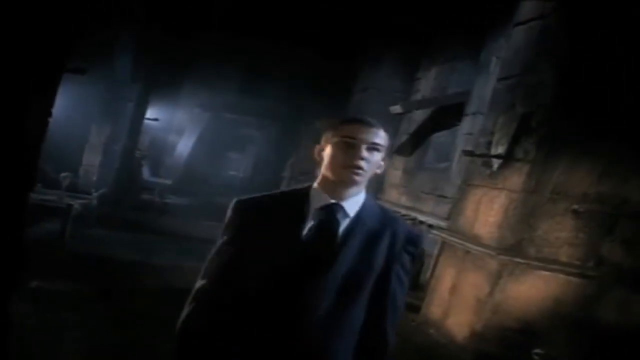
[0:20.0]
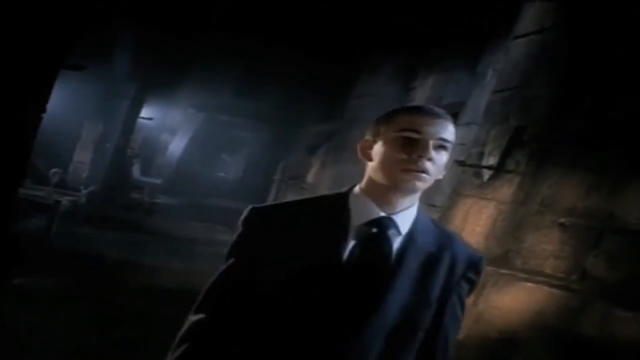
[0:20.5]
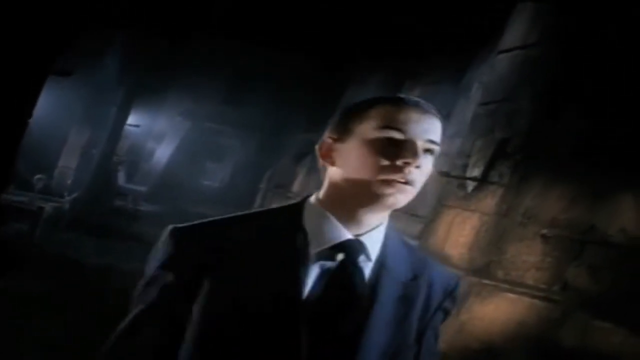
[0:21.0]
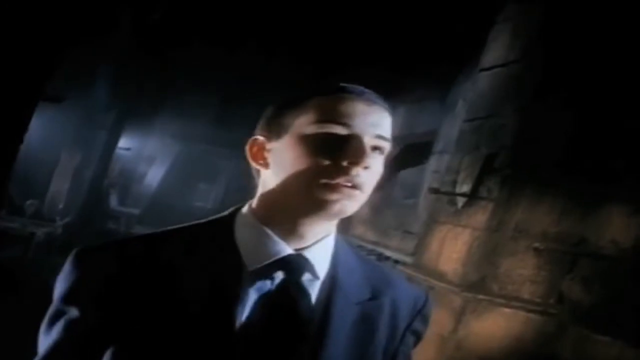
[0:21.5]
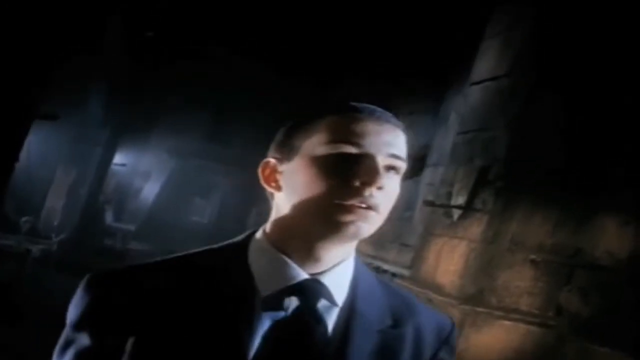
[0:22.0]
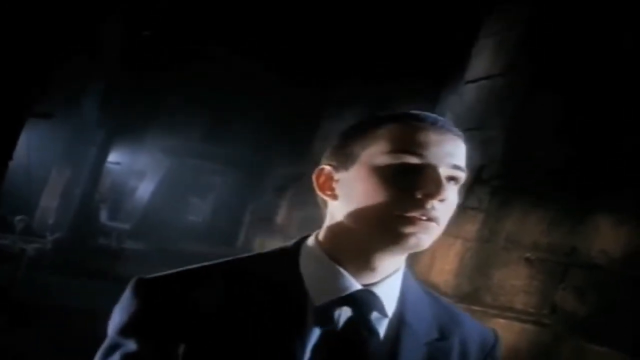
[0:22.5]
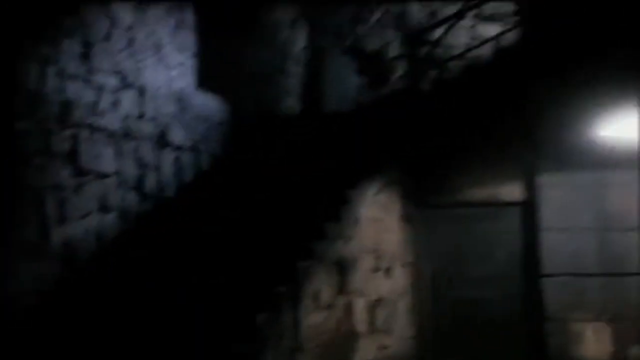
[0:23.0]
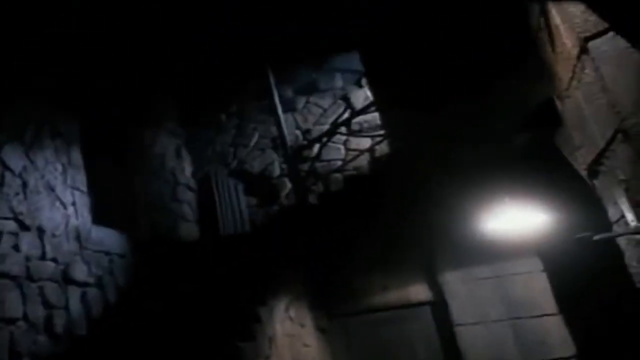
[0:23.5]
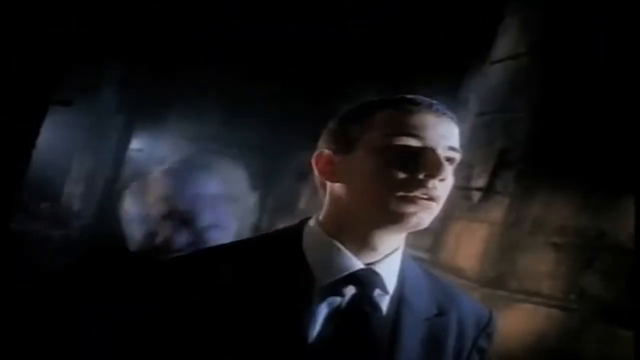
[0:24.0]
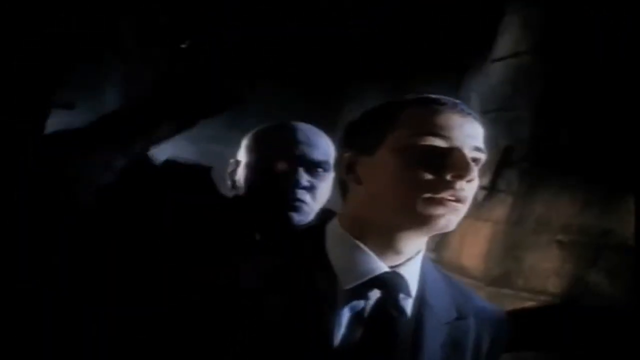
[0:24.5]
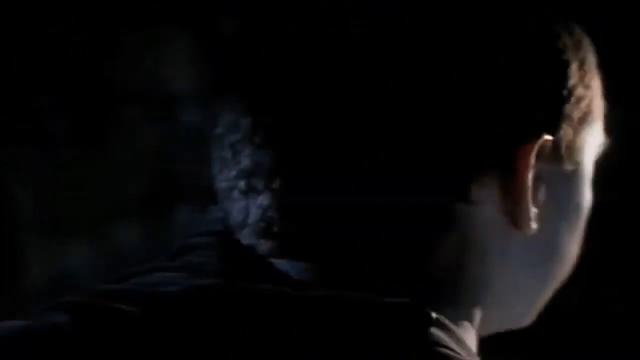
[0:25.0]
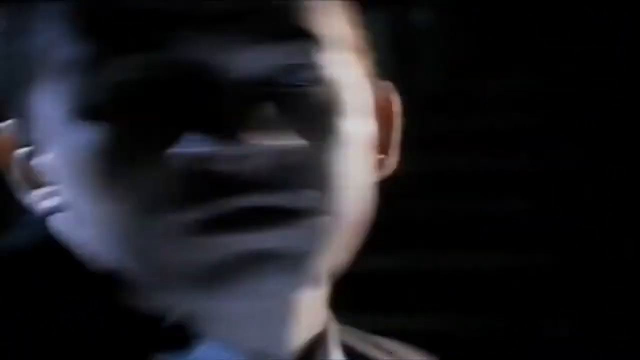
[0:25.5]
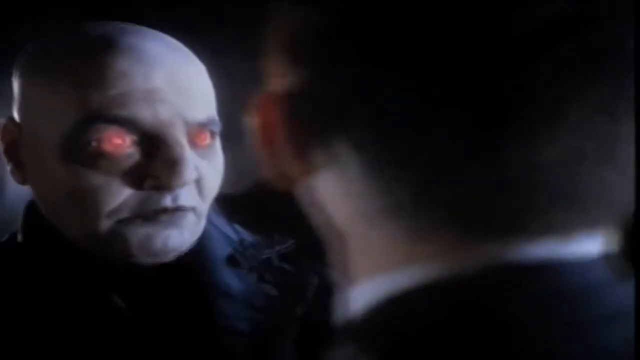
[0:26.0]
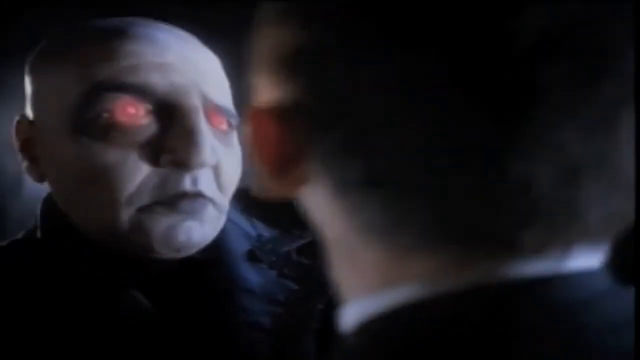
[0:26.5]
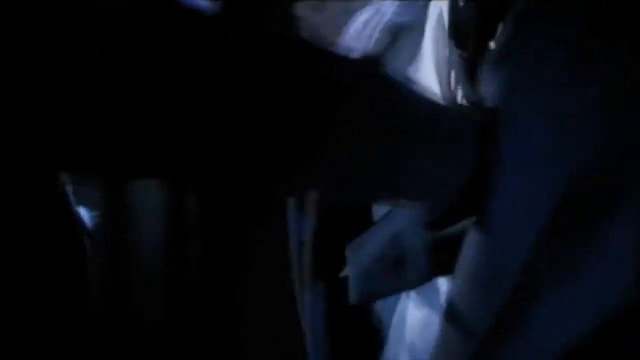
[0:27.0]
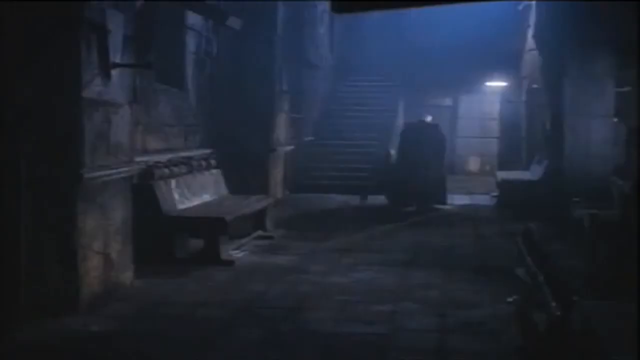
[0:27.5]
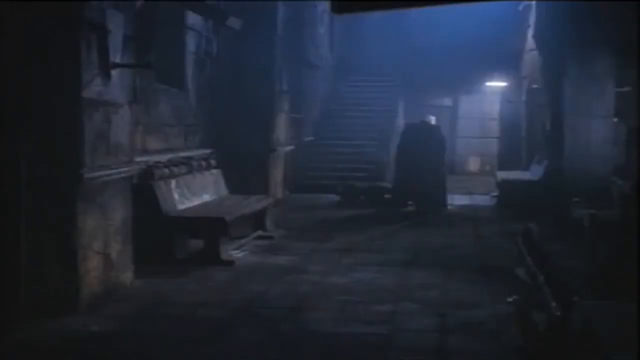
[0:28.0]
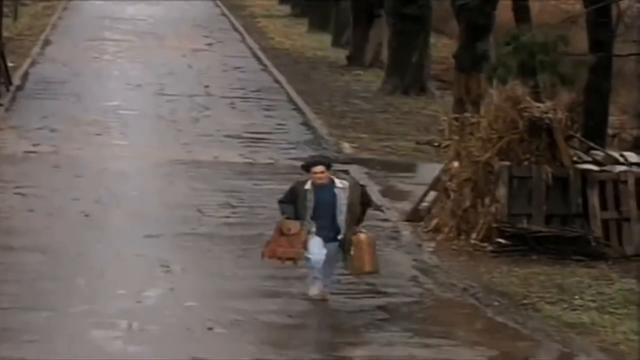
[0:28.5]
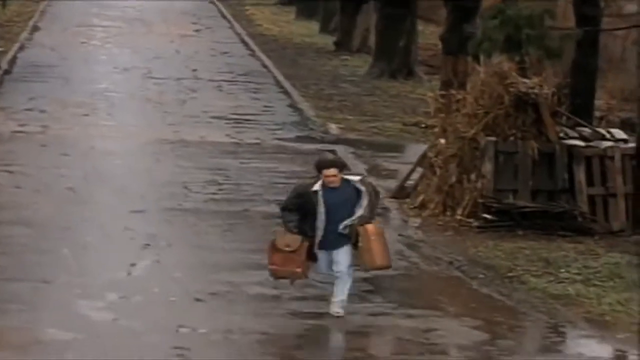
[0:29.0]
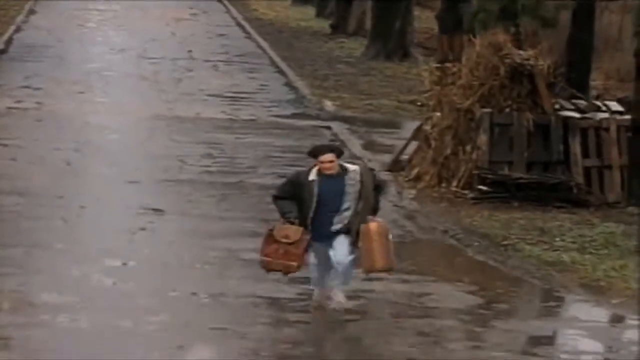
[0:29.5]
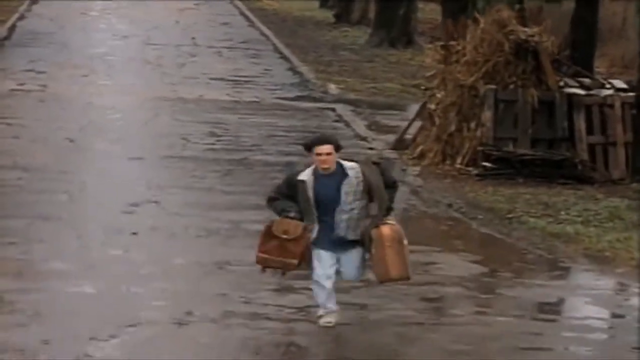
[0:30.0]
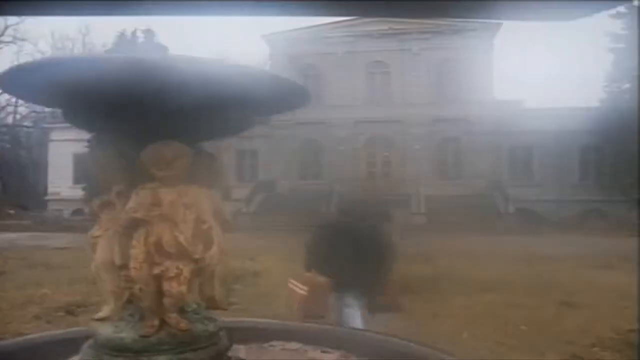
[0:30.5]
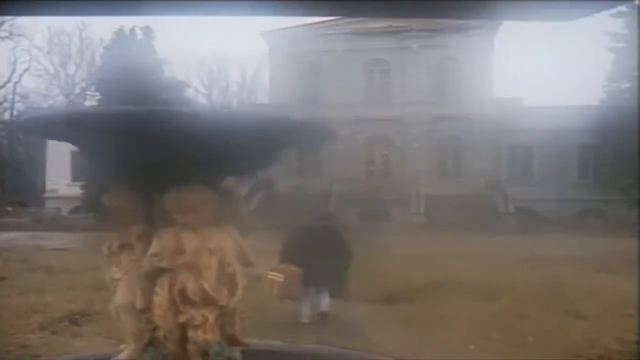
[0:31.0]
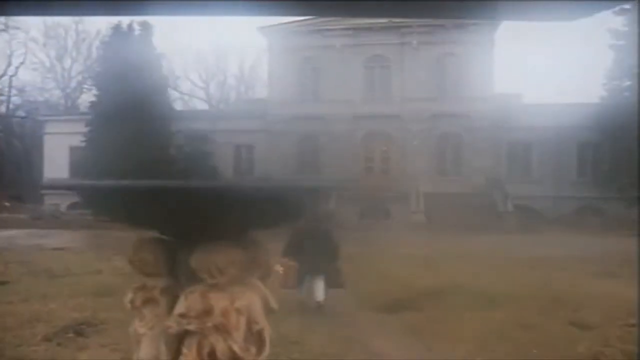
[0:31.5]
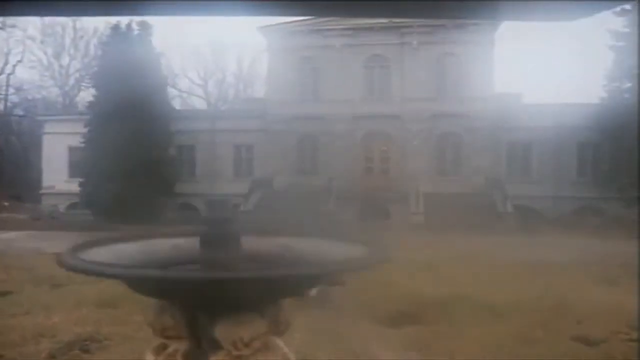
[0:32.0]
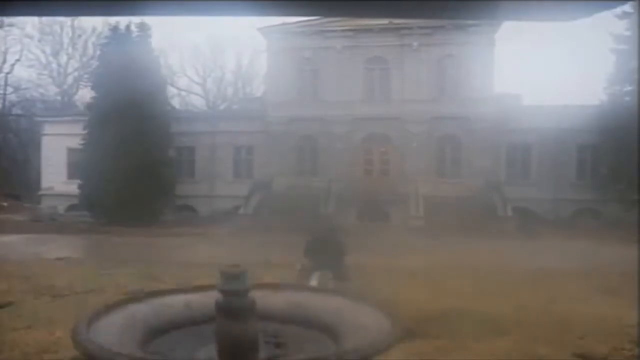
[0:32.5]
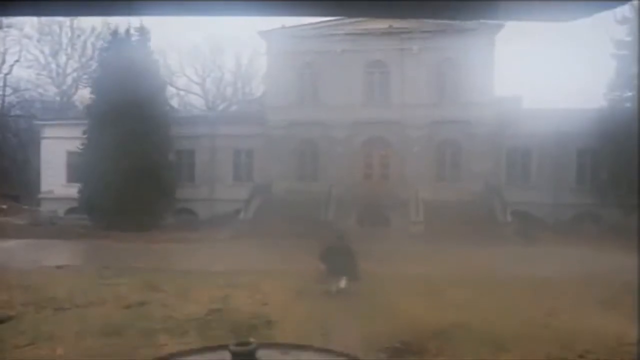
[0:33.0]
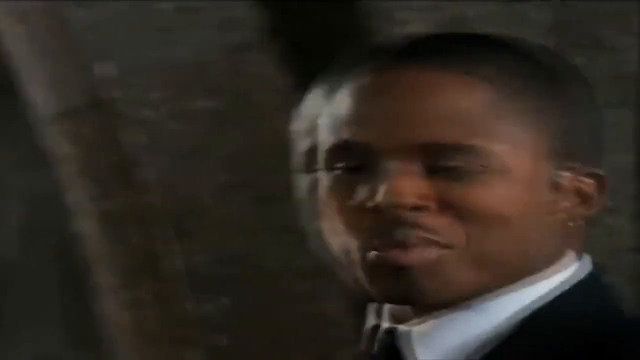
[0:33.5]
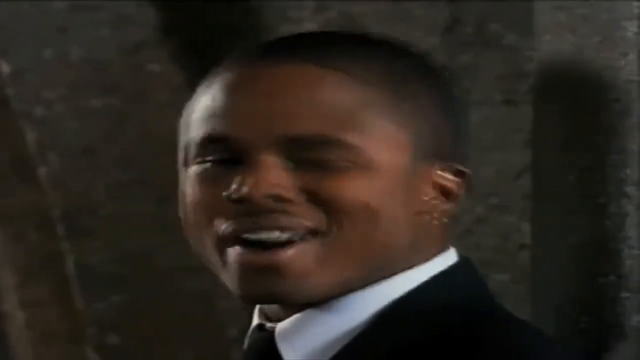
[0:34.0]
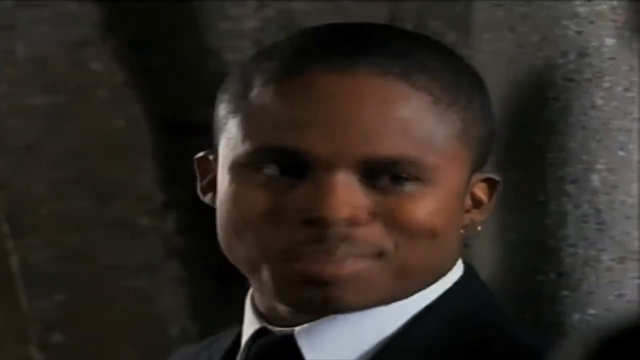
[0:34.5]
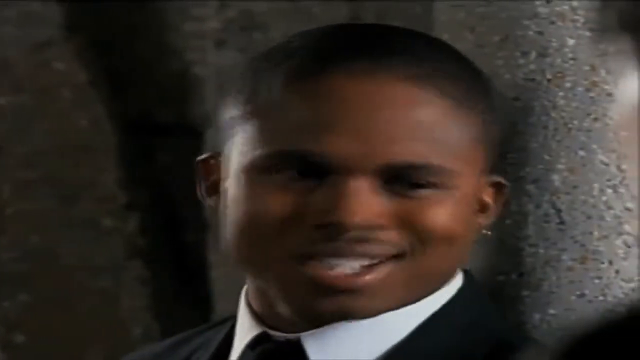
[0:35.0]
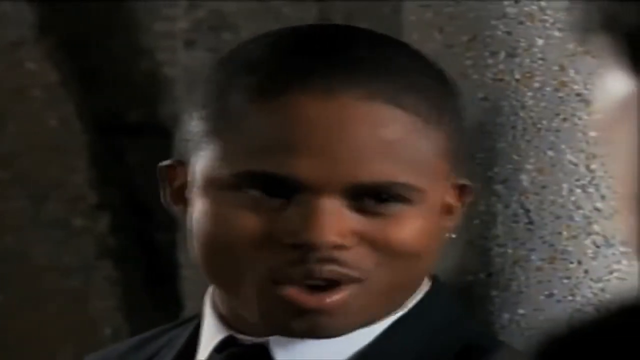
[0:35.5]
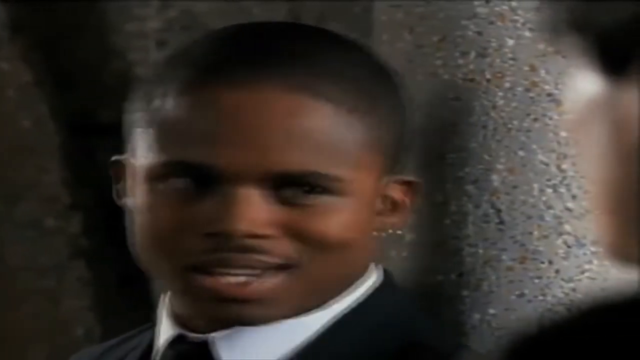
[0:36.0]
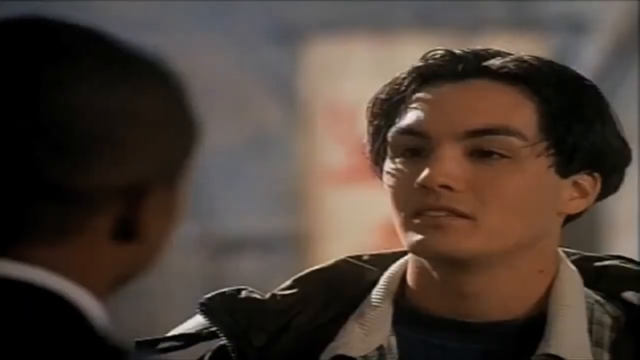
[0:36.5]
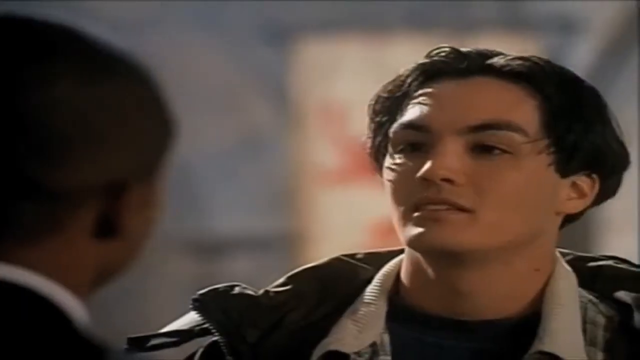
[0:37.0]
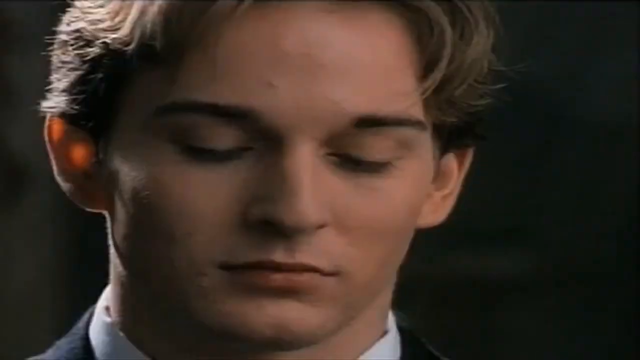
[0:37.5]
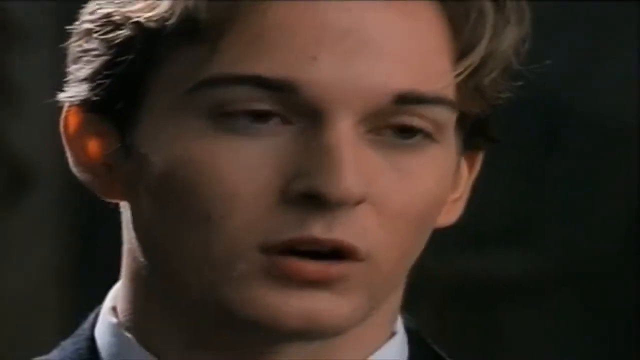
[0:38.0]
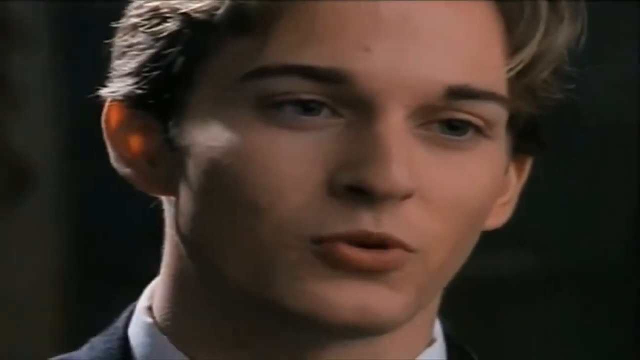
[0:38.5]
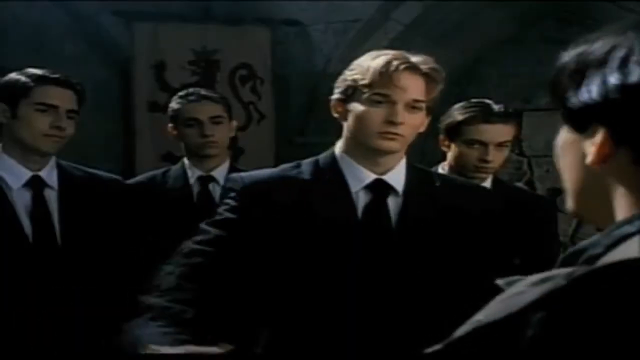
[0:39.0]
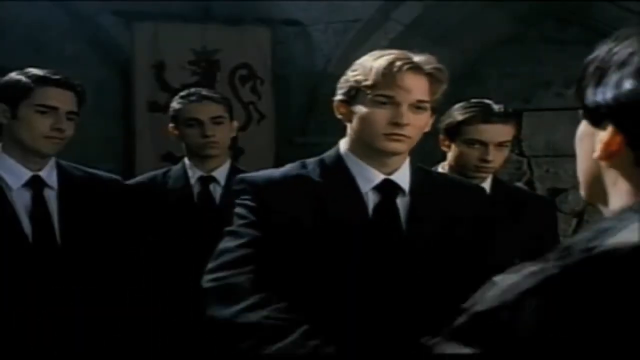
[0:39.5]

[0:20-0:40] More characters appear, about seven or eight in total. A young man with a white tie stands in the mansion and begins to look upward. As he looks up, someone comes up behind him: an odd-looking figure with red eyes and maybe a bald head, possibly not completely human, who appears about to either choke or stab him. The scene cuts to a young man, perhaps in his 20s or early 30s, running across the grass toward the mansion with two pieces of brown luggage. Apparently a second person then runs through the grass toward the mansion with suitcases, as if late. Back inside the mansion, a young Black man in a suit and tie is shown, followed by a group of young men in suits and ties shaking hands with each other, giving the impression of some kind of cult meeting.